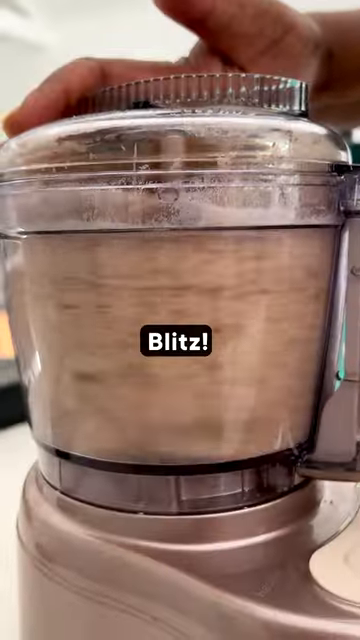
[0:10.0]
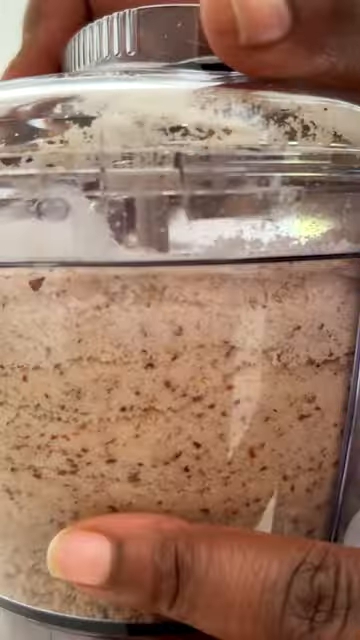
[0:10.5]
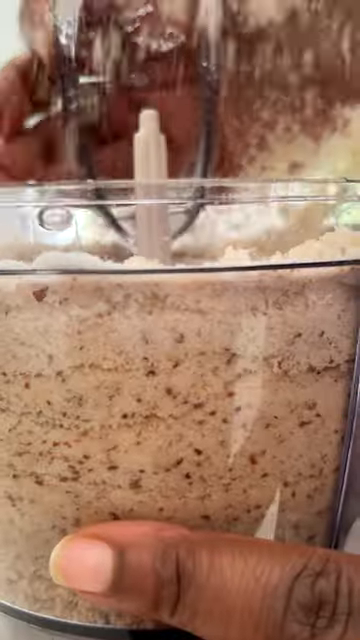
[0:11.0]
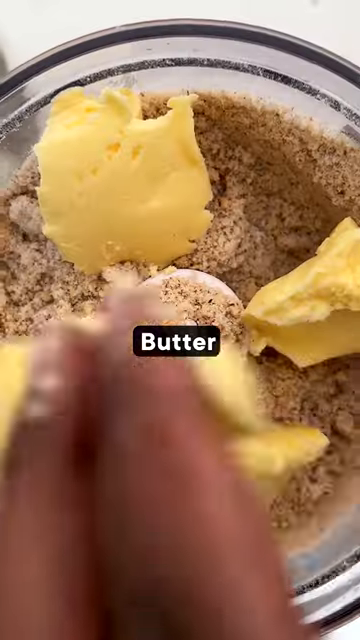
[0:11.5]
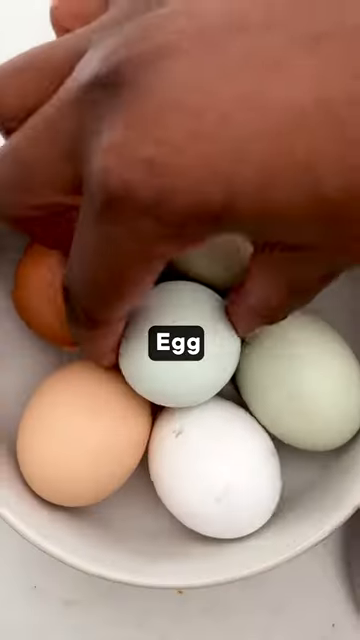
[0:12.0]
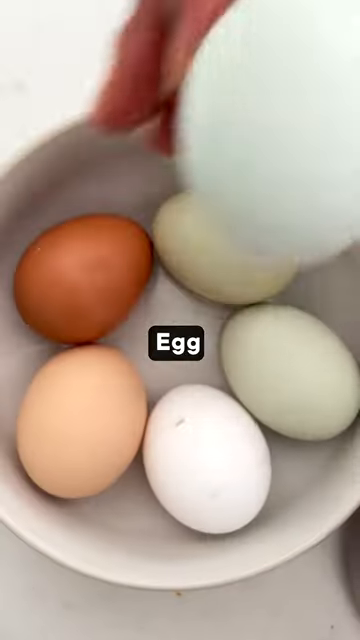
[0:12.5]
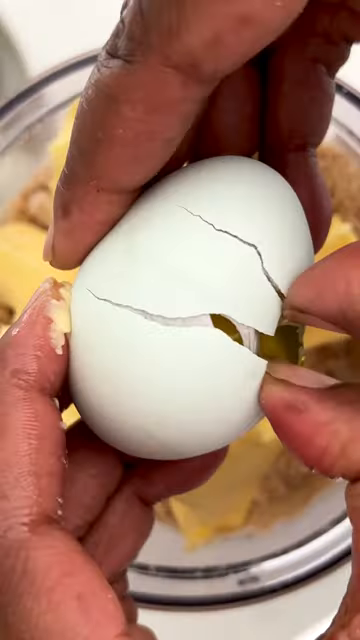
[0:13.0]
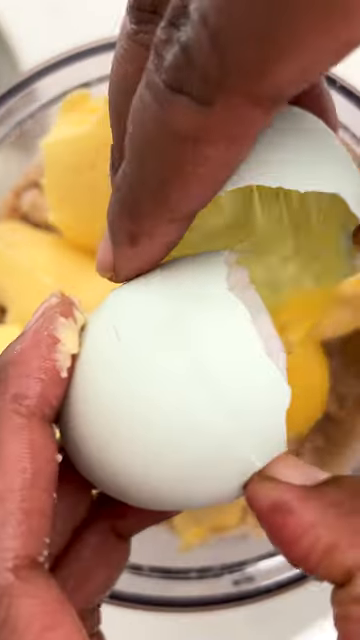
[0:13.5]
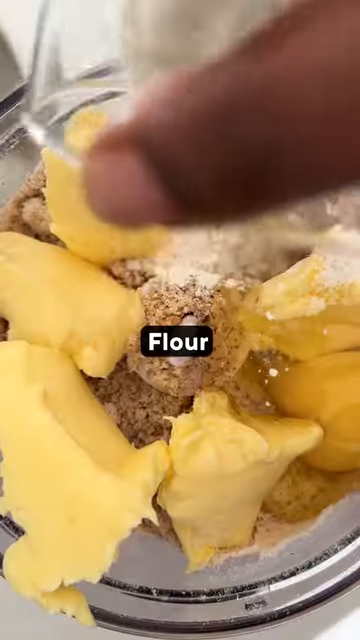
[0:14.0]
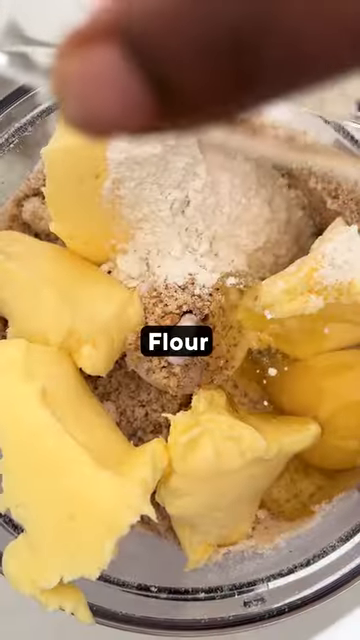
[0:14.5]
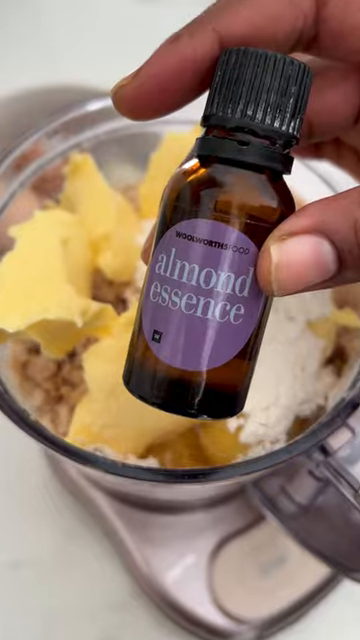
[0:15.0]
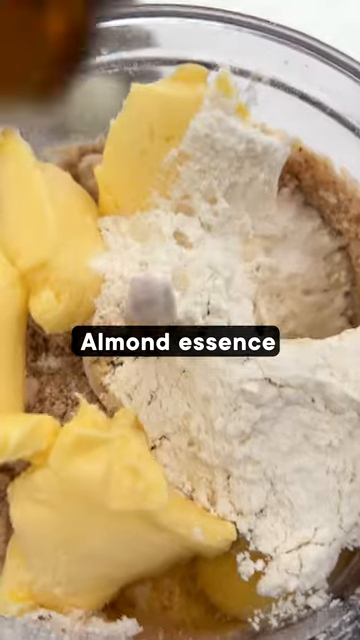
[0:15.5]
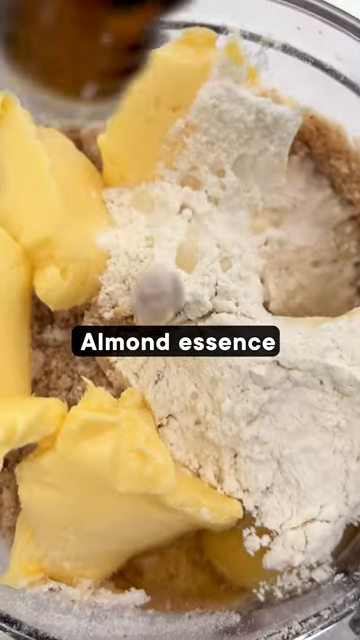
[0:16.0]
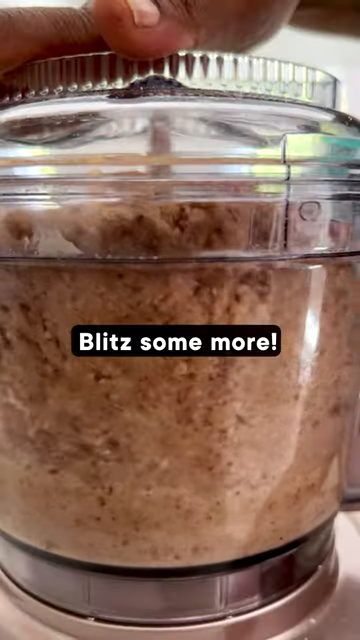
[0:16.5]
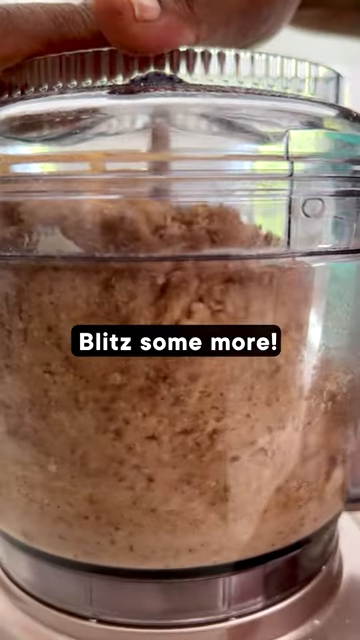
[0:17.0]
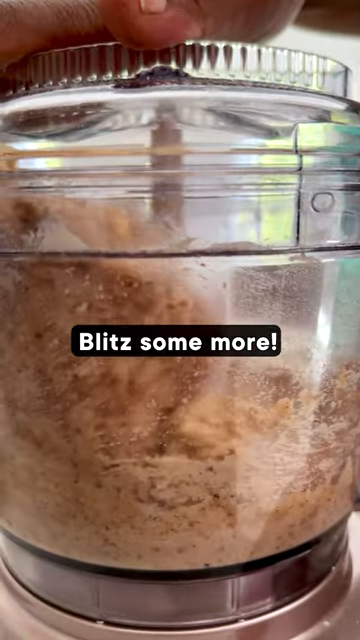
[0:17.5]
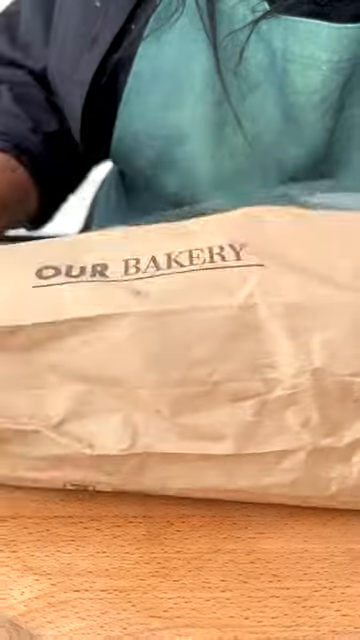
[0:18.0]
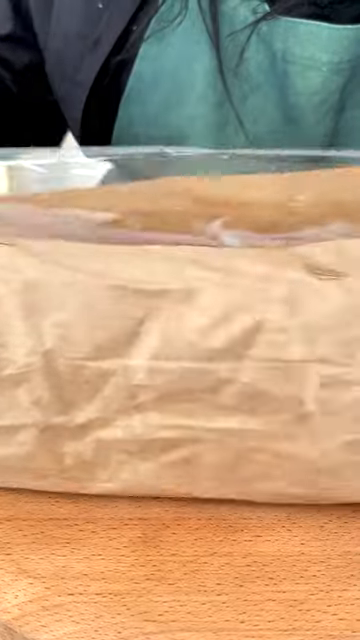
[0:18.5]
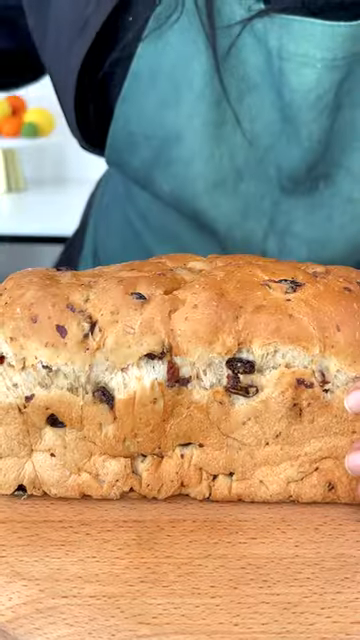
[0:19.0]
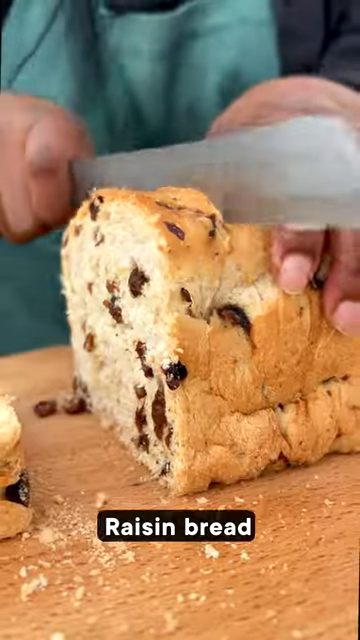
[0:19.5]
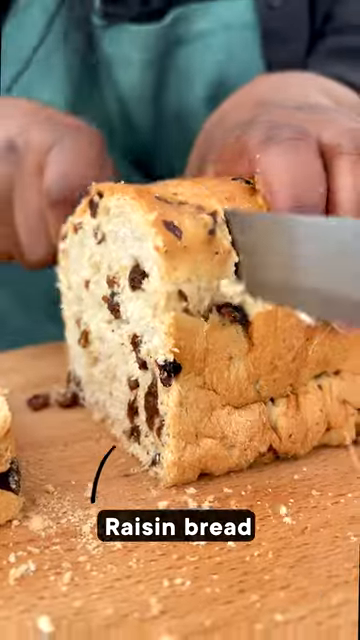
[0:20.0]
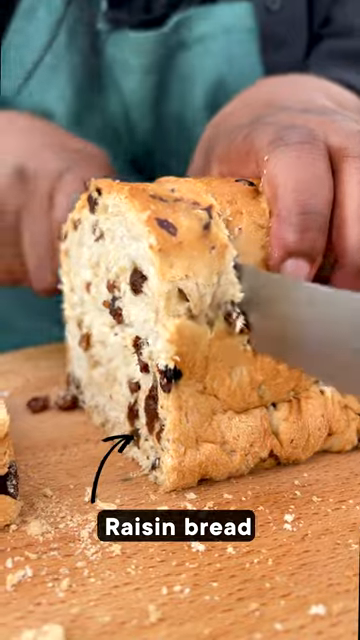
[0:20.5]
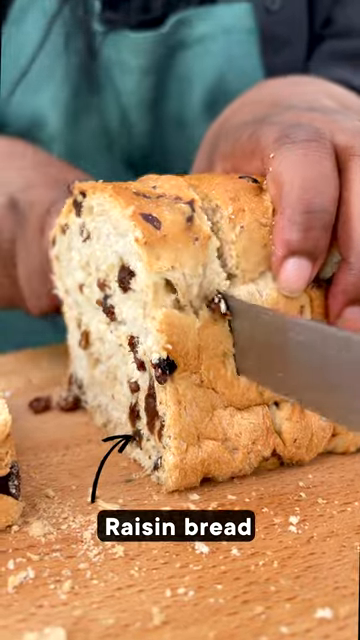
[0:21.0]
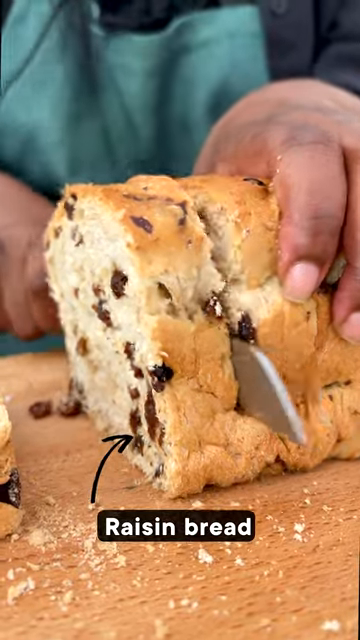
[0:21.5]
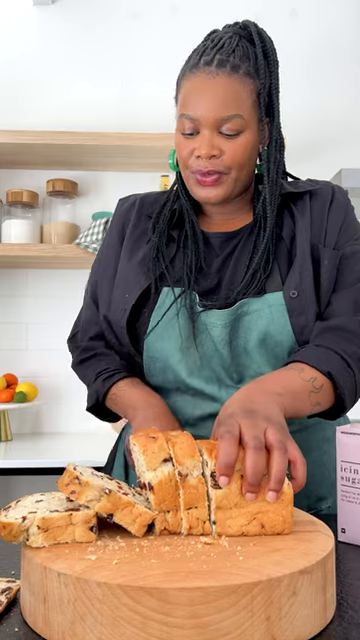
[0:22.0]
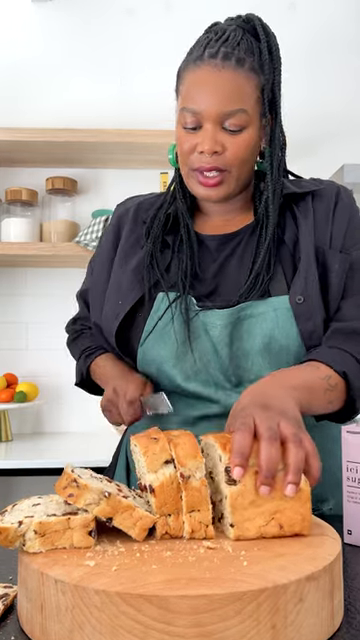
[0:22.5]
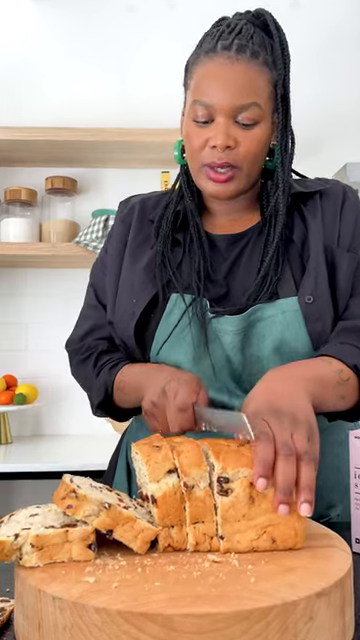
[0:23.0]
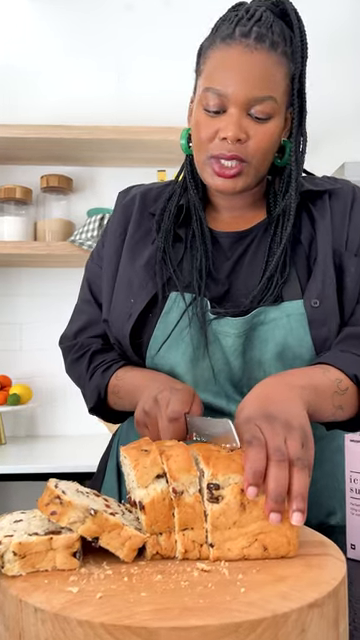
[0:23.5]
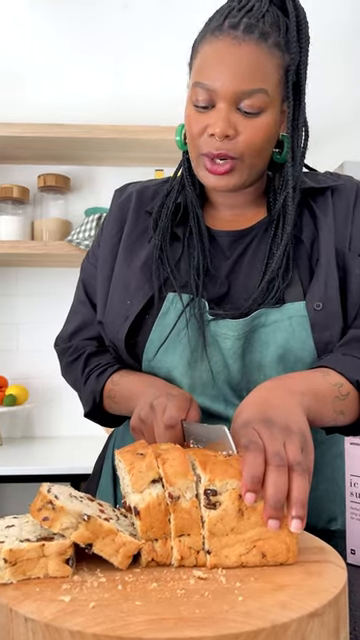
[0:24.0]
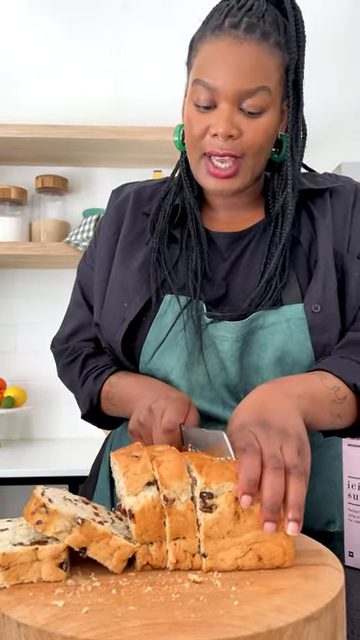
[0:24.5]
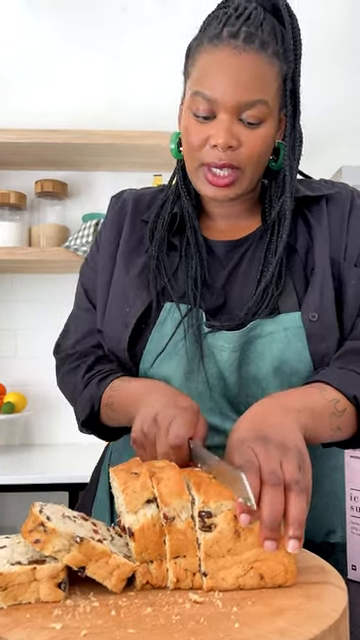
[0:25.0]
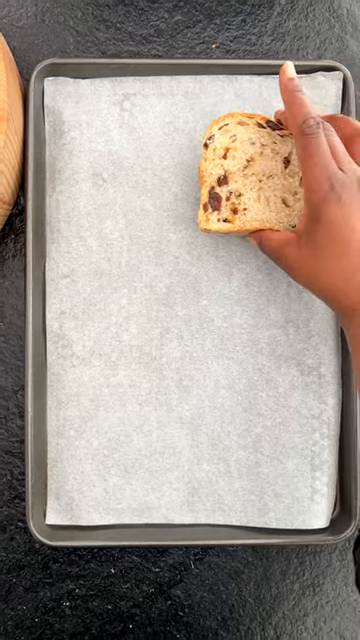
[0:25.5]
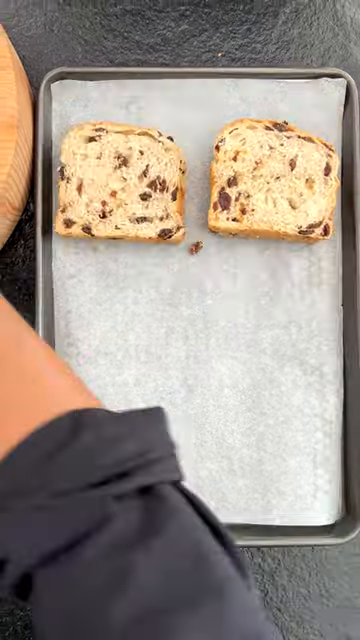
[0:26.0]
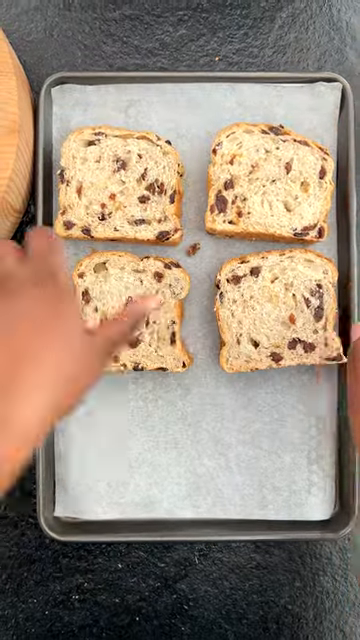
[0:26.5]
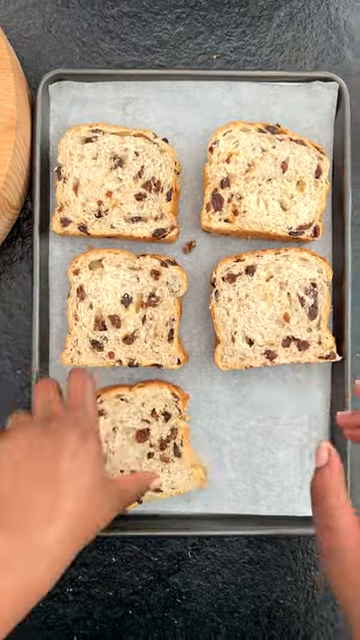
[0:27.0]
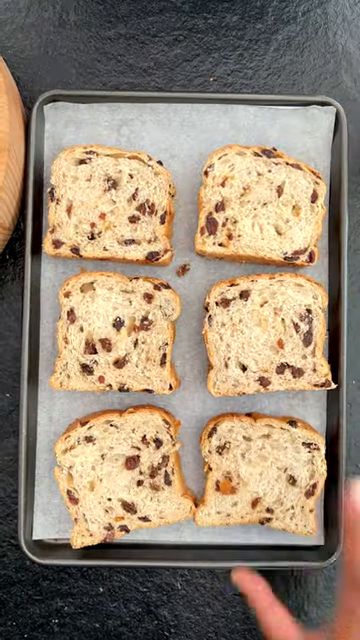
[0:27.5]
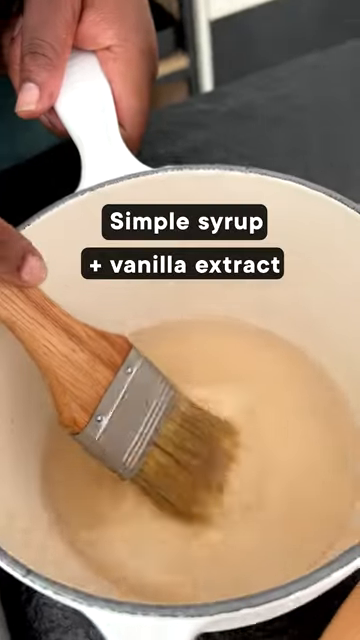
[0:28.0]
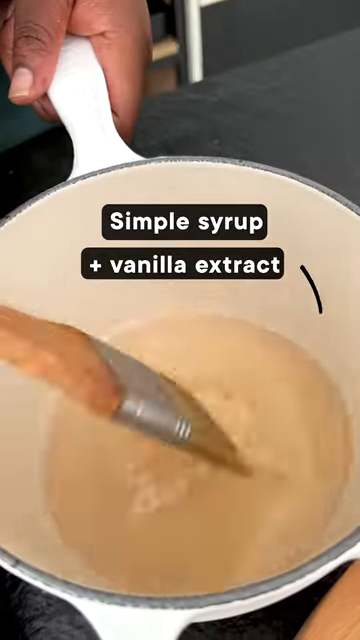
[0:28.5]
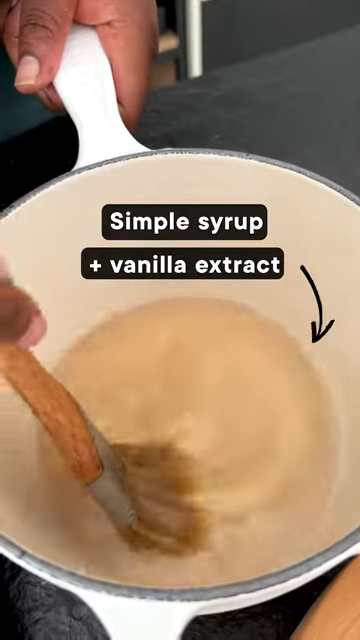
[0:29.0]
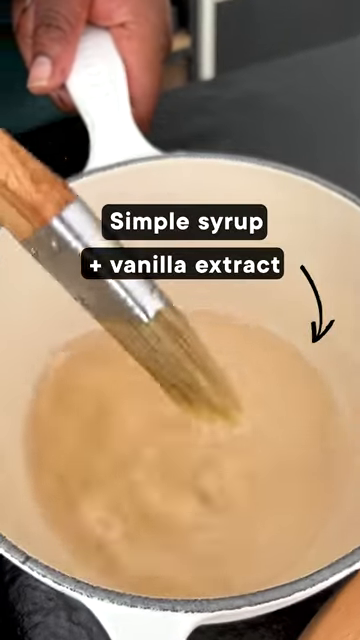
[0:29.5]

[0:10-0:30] The scene opens on the blender with a title reading "Blitz!" in white lettering on a black-outlined rectangular background. She blends the ingredients, opens the top of the blender and adds butter: three pieces of butter are shown with the title "butter" in the center, and she adds a fourth. She then adds eggs and flour, and text reads "almond essence", so she appears to be adding several more ingredients after the first blending. In the next scene the text "Blitz some more!" appears in white lettering as she blends again, holding the top of the blender while pressing down. She takes raisin bread out of a bag and opens it up; it is somewhat loaf-like. A title reads "raisin bread" and a black arrow points to the raisins in the bread as she cuts it, cutting down with her right hand while holding the loaf with her left. The camera pans to her cutting multiple slices while talking out loud and setting them down on a tray to cook. She then takes vanilla extract and begins putting something, possibly a baste, on the slices.